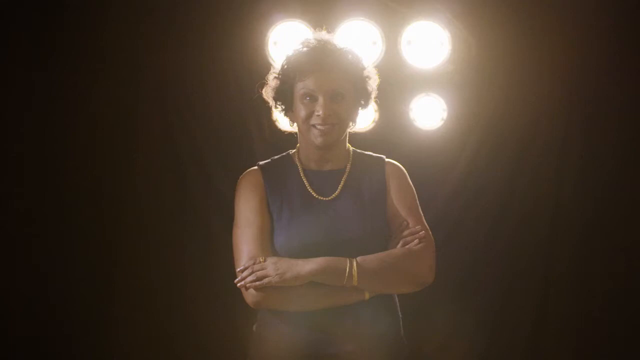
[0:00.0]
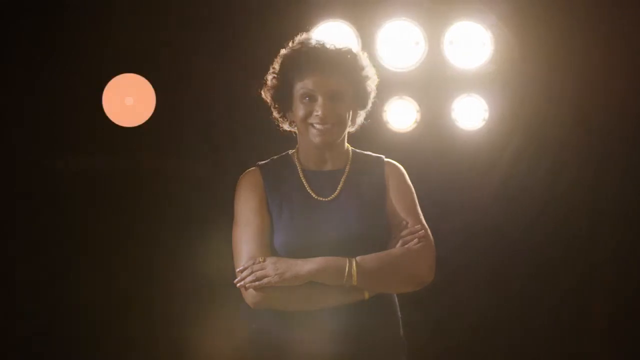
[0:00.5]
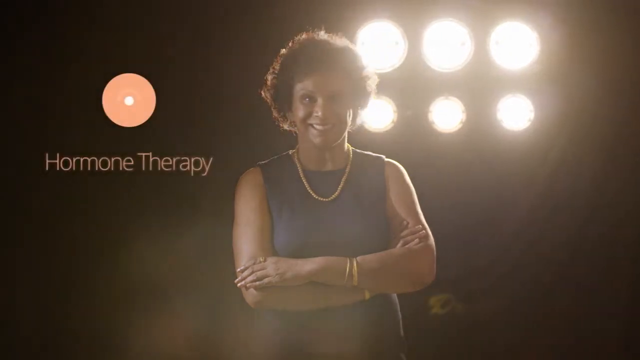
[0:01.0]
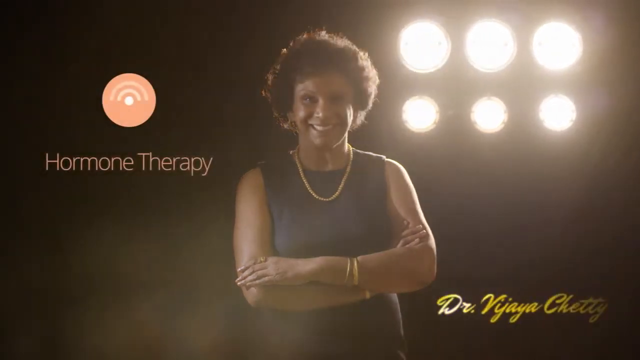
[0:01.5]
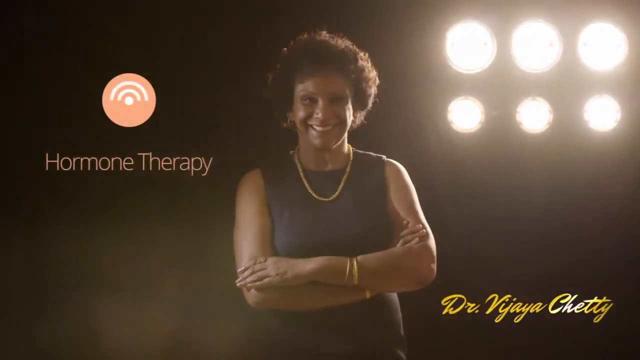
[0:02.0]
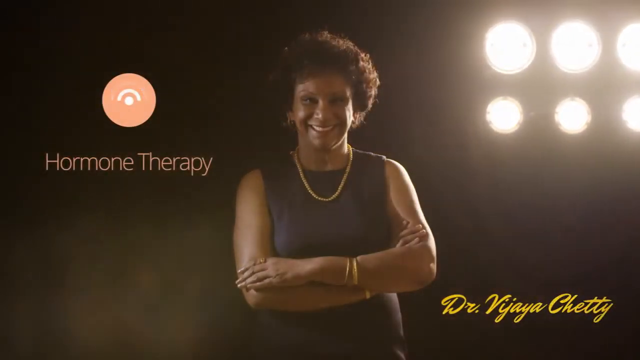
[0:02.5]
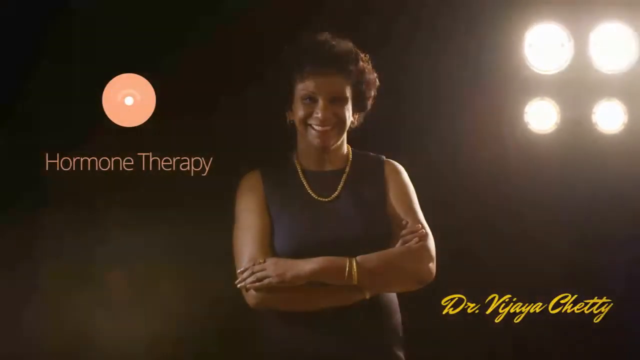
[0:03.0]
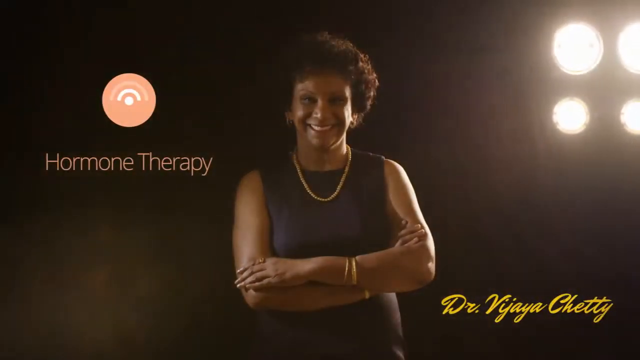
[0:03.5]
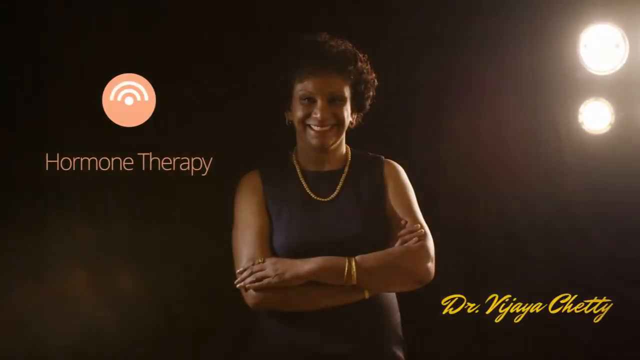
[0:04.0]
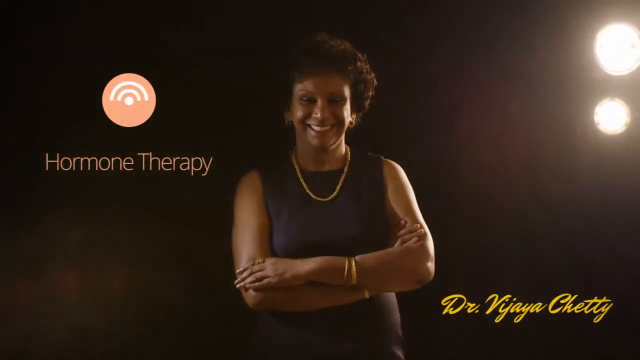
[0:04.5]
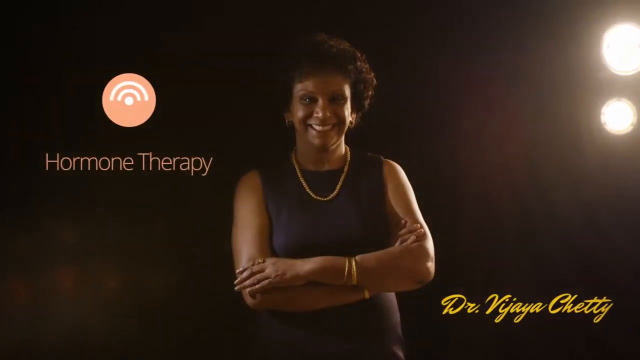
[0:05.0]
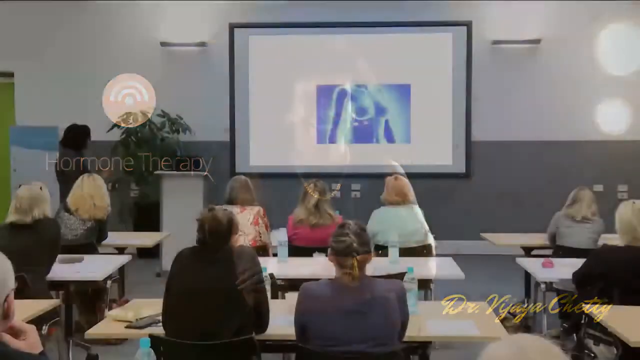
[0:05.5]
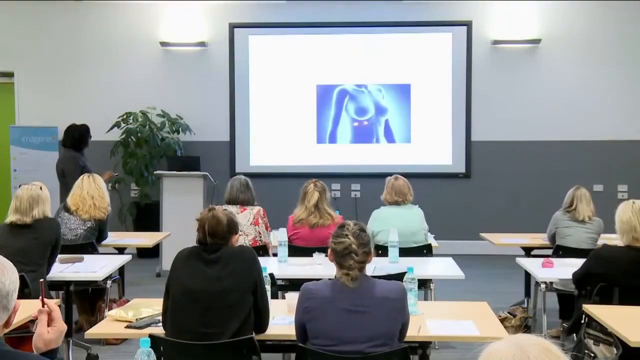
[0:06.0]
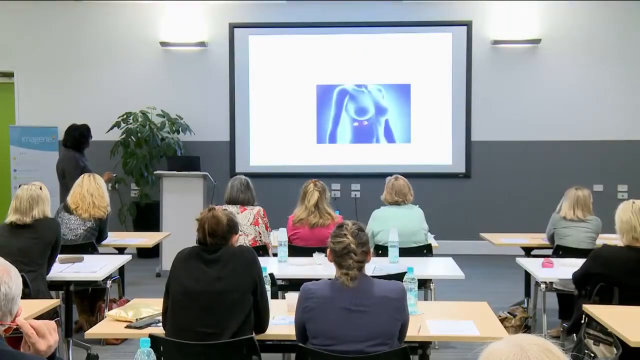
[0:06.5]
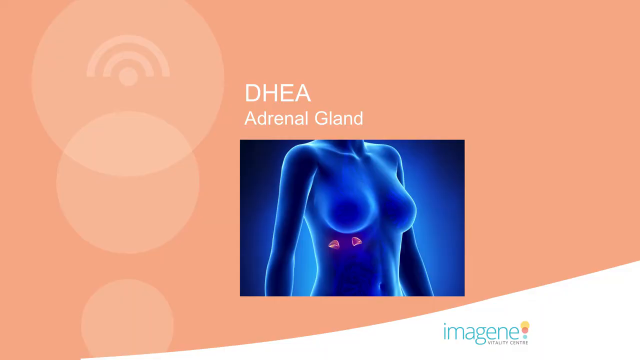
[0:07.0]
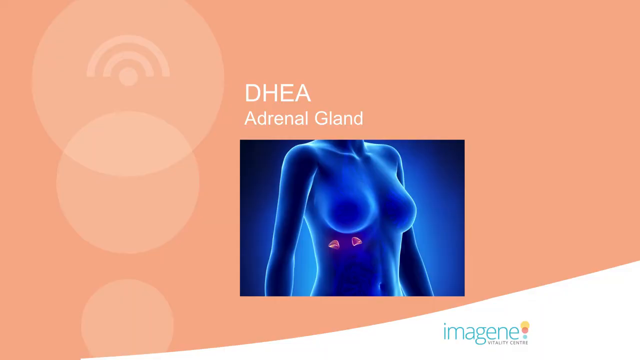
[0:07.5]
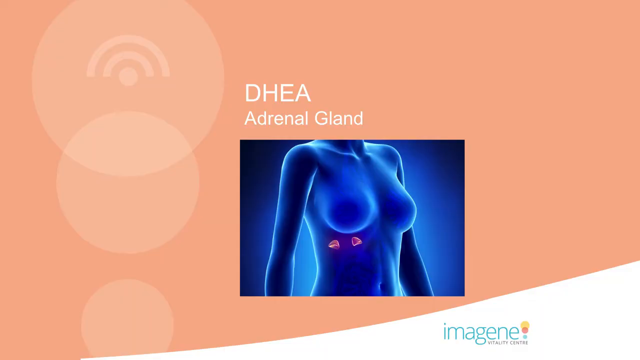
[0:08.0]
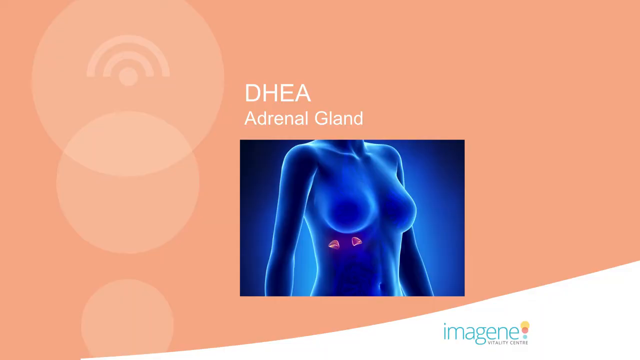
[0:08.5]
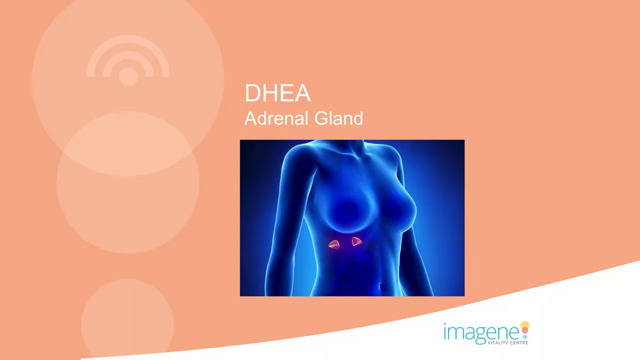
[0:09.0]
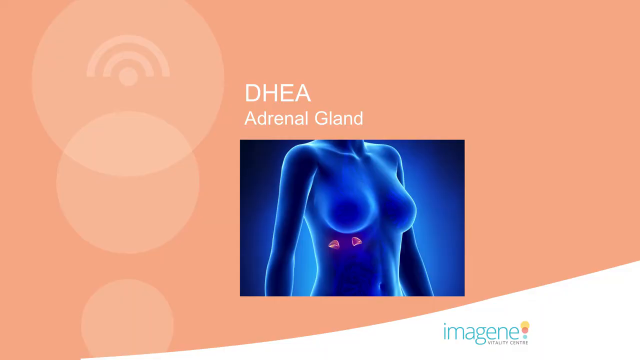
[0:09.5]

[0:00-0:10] Against a black background there are camera set lights, three on top and three on the bottom. In the middle is a woman with her arms folded, wearing a sleeveless shirt that looks navy blue, a gold necklace and a gold bracelet; she is in front of the light. The lights then turn as if the camera is moving to the left, and a name appears that looks like Dr. Vivian Chetty. The words "hormone therapy" appear on the side of the screen in an orange color. Then what looks like a PowerPoint presentation appears, its background the same color as the "hormone therapy" text, showing a woman whose upper body is blue.